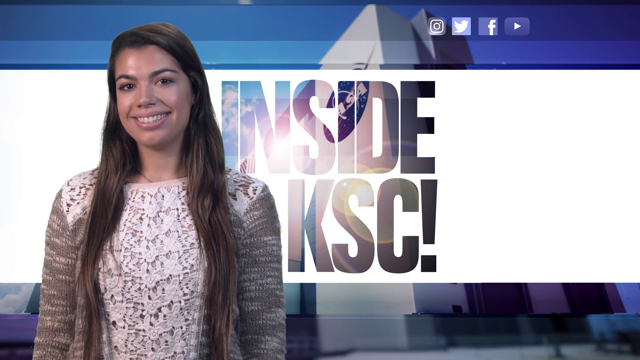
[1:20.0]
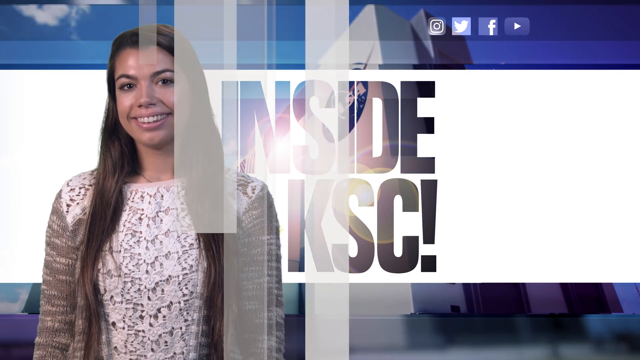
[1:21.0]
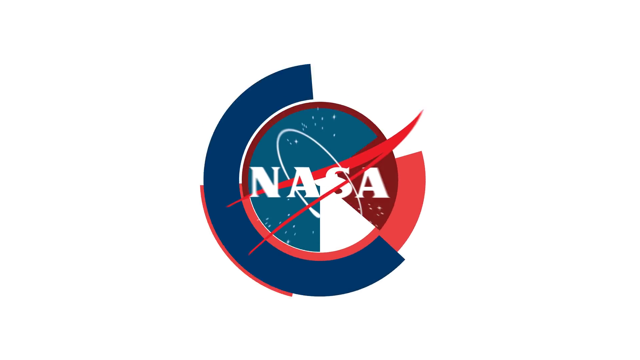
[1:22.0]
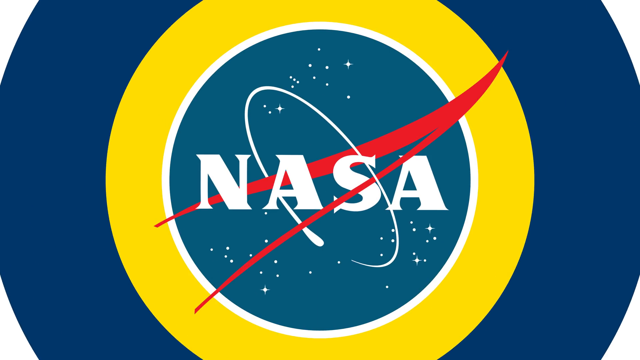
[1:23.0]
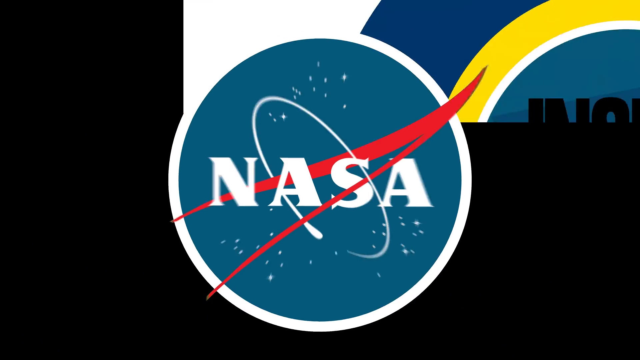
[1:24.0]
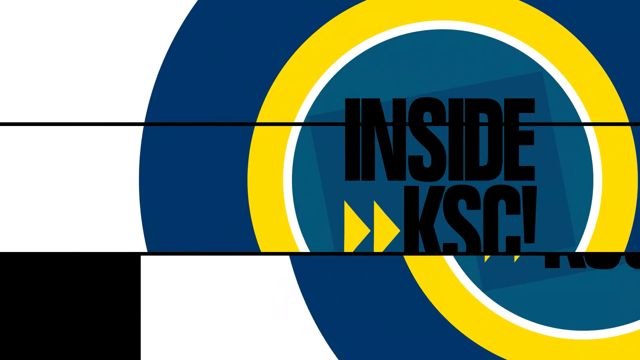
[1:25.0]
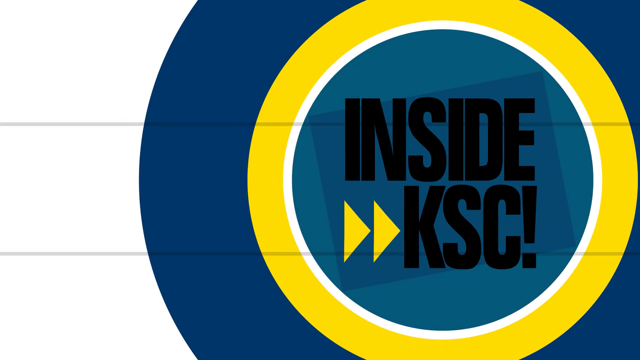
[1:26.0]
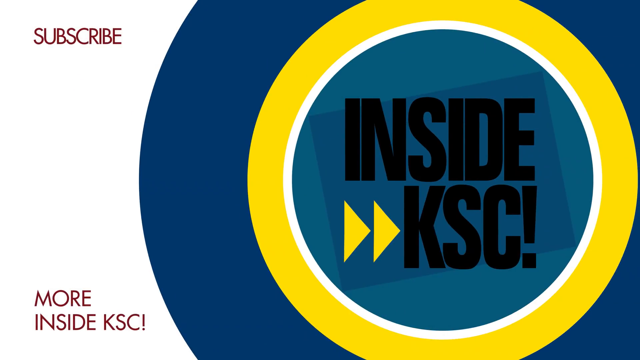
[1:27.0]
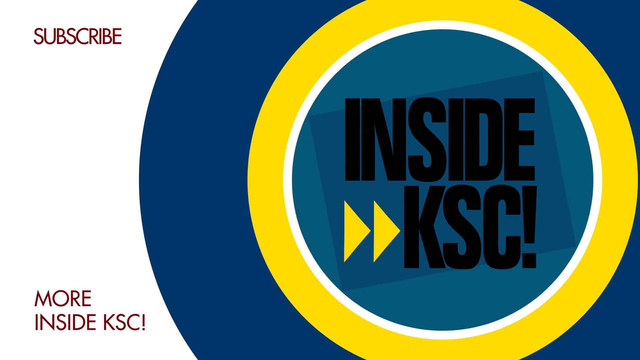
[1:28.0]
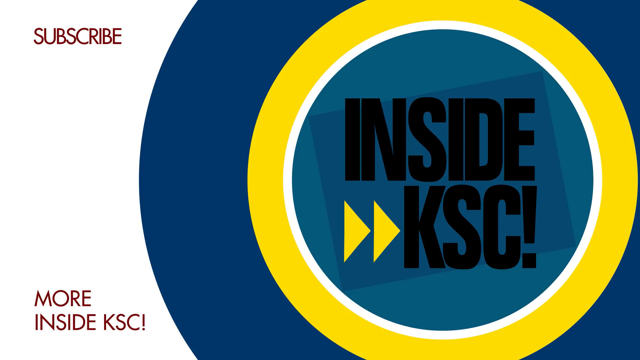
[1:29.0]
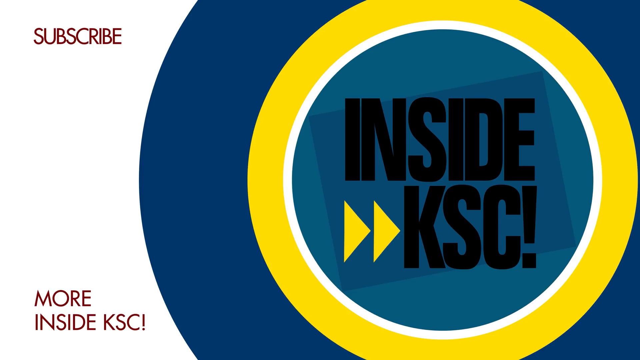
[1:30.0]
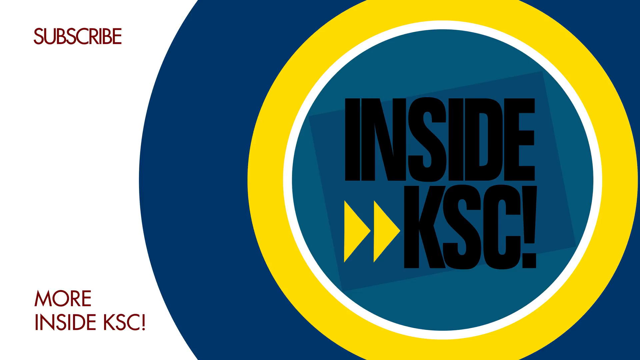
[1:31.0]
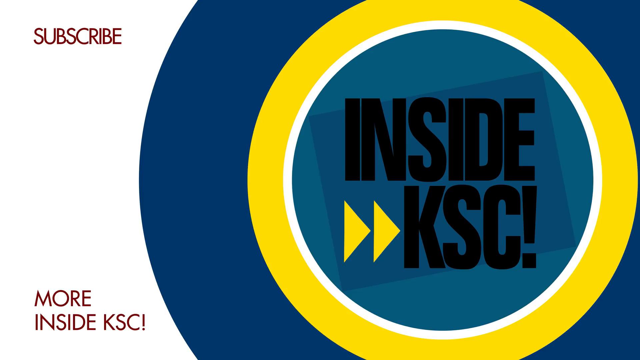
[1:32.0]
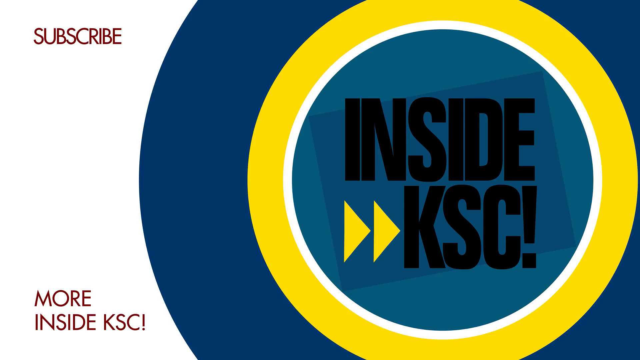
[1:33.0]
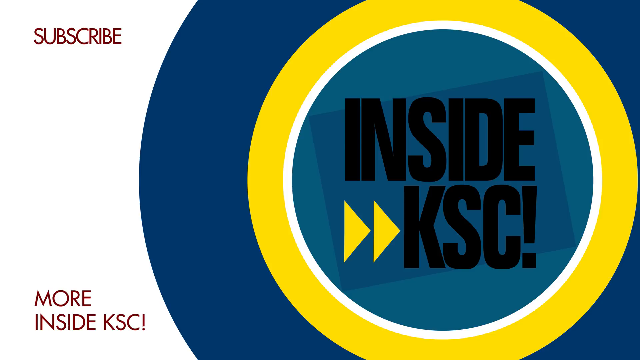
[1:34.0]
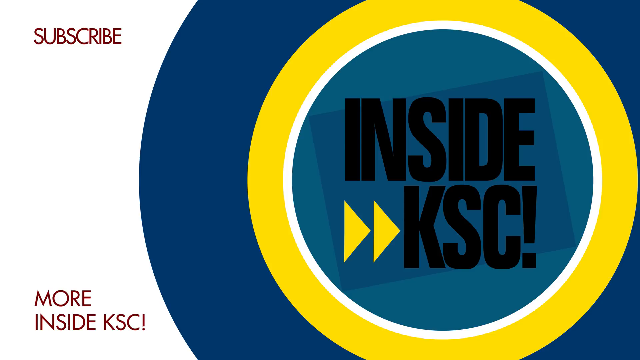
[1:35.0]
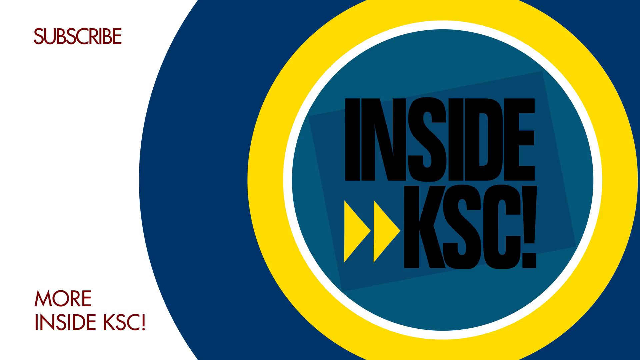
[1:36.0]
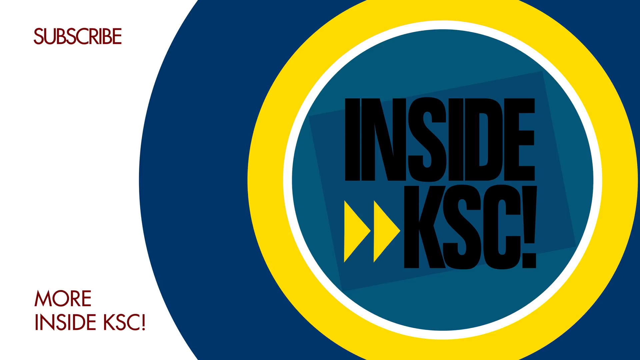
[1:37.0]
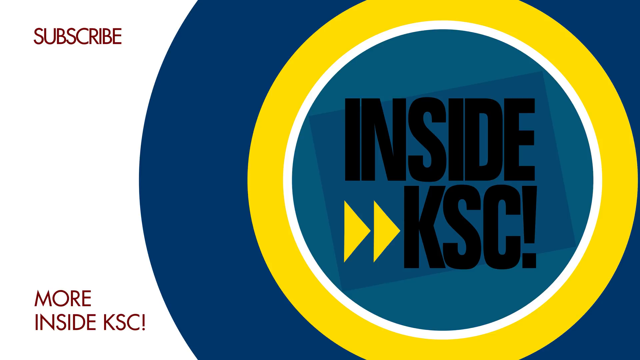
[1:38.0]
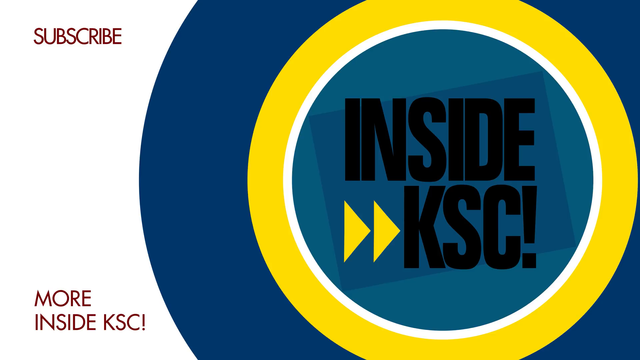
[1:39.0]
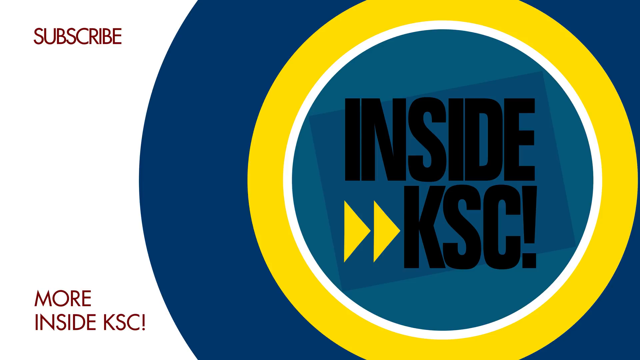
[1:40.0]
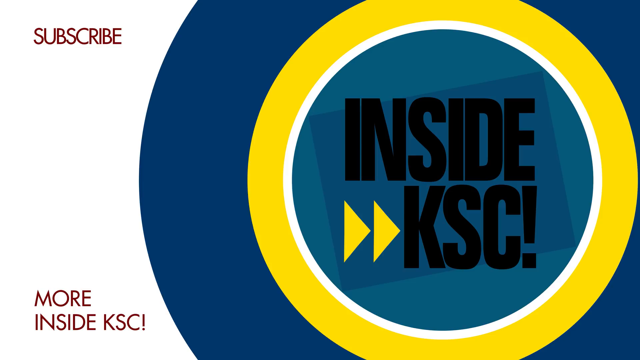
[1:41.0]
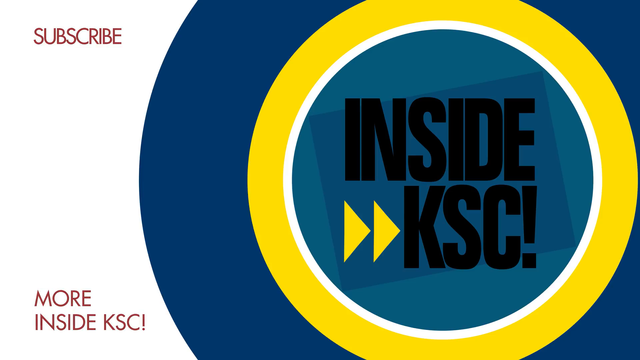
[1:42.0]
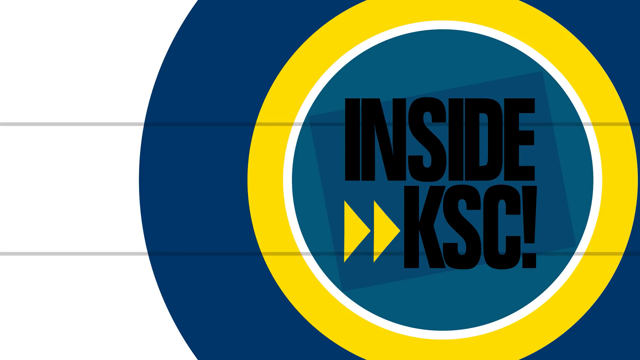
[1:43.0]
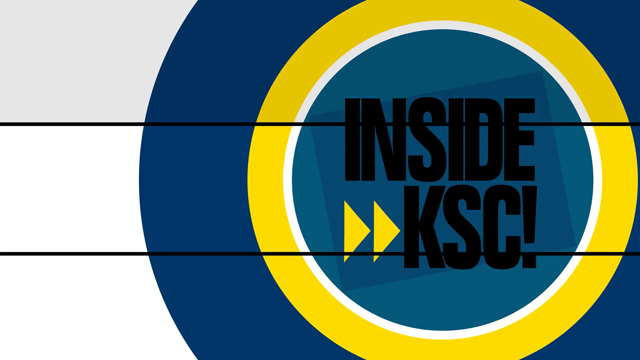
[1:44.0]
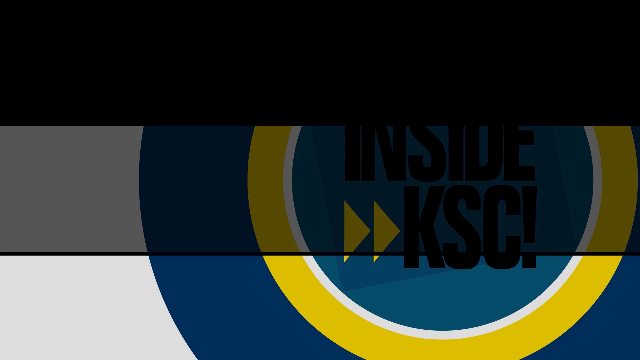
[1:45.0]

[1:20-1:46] On the left side is a white woman with long brown hair, wearing a white crocheted long-sleeved top. Above her are two shades of blue bars, then it goes white. Behind her left shoulder it says "Inside KSC", with white, gray and brownish color. The screen goes white and the NASA logo appears in the center, with a round reddish circle around it and the N-A-S-A lettering with a red lining going through the letters, blue on the outside and yellow on the interior. It then goes black and disappears. Next, a white, blue, yellow, white and teal graphic with black lining shows black wording saying "inside KSC", with two yellow arrows pointing at the K and some black lines going over the center. At the top left, on a white background, reddish lettering says "subscribe", and directly below it reads "more inside KSC".